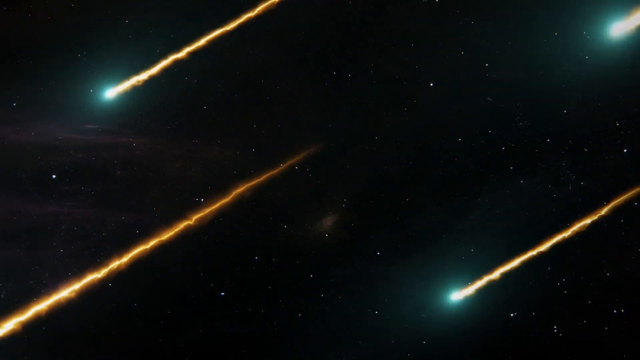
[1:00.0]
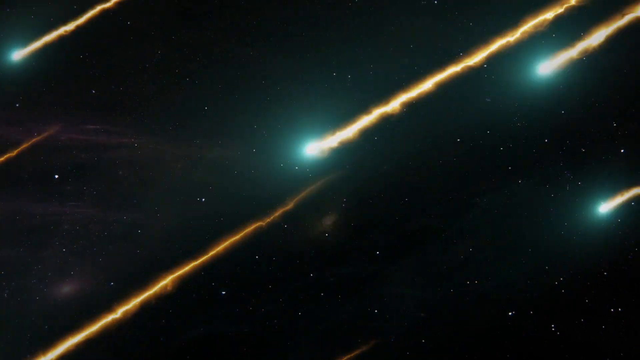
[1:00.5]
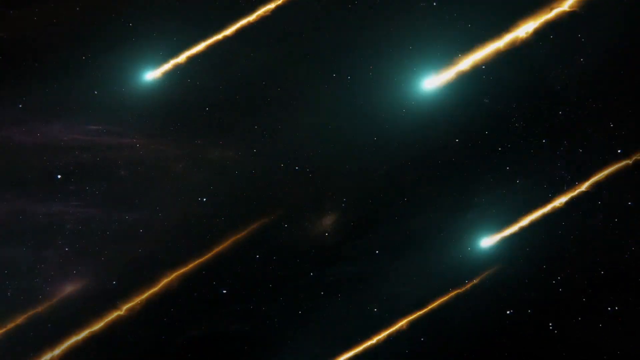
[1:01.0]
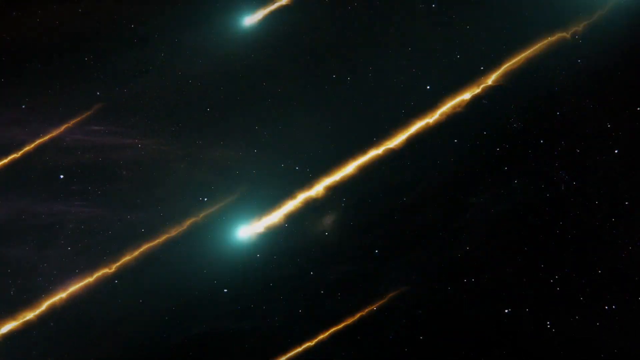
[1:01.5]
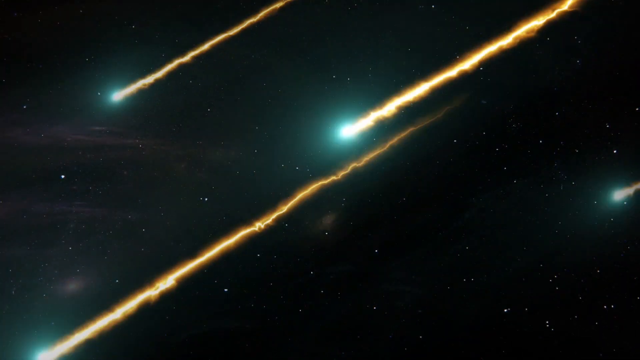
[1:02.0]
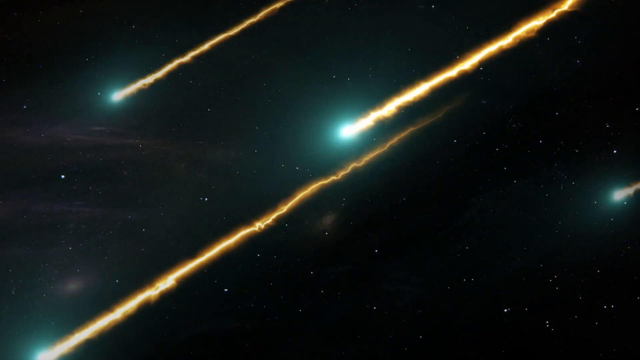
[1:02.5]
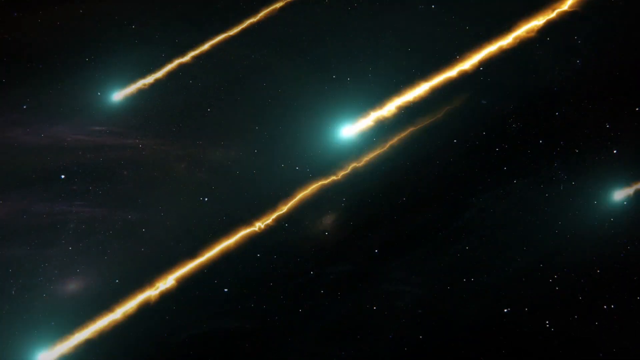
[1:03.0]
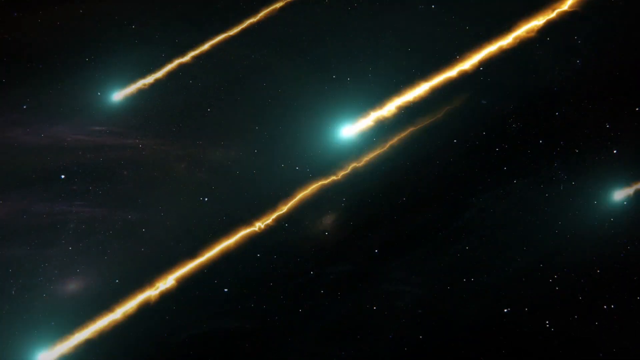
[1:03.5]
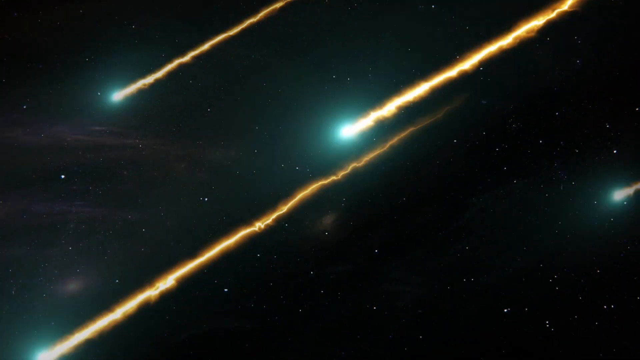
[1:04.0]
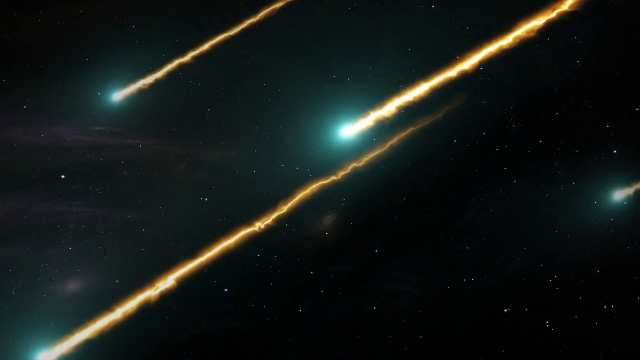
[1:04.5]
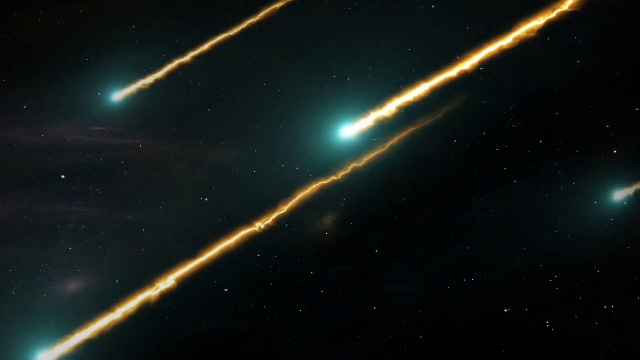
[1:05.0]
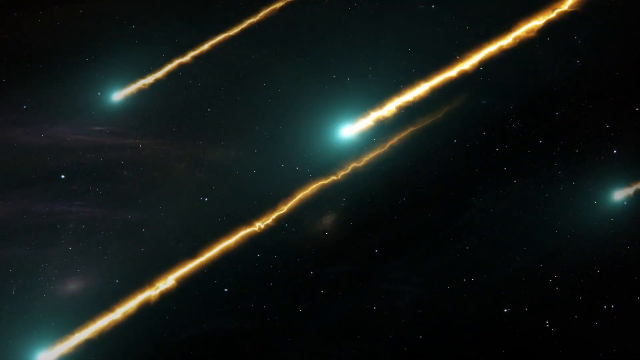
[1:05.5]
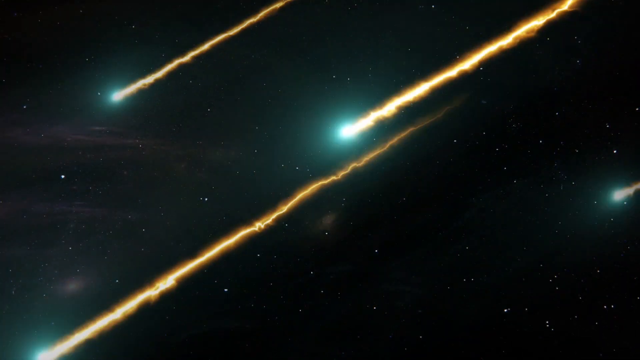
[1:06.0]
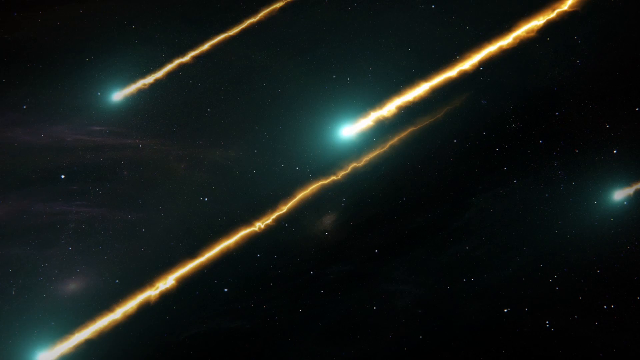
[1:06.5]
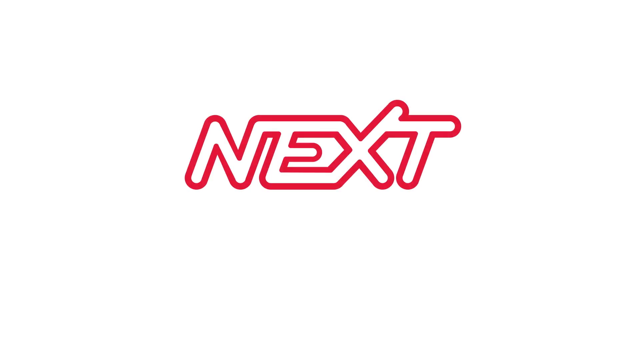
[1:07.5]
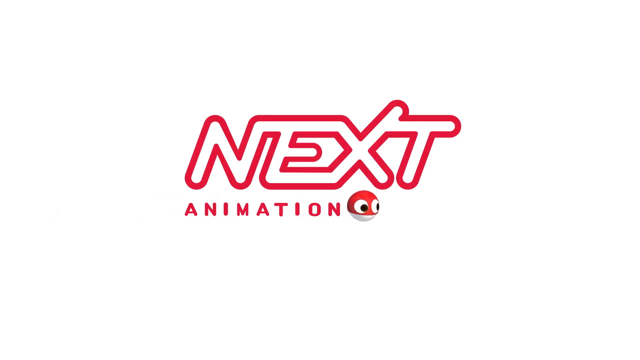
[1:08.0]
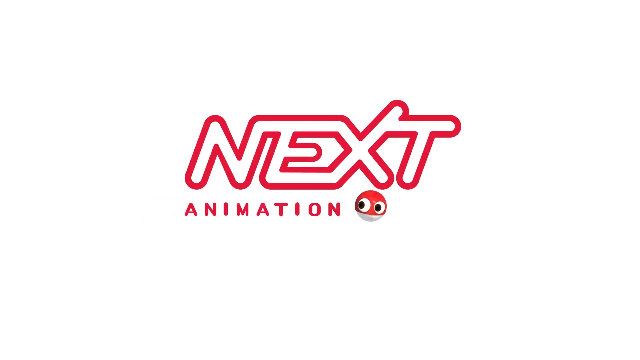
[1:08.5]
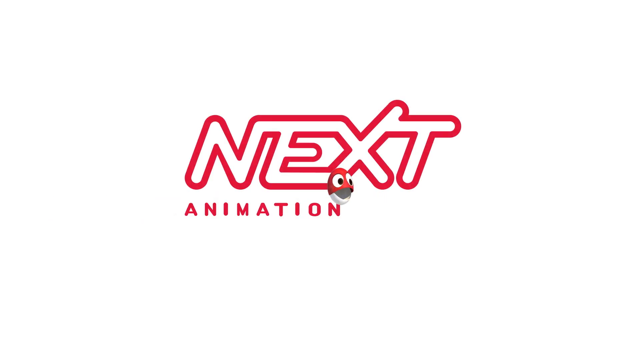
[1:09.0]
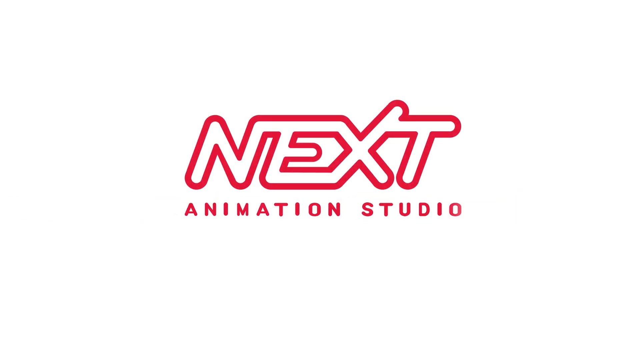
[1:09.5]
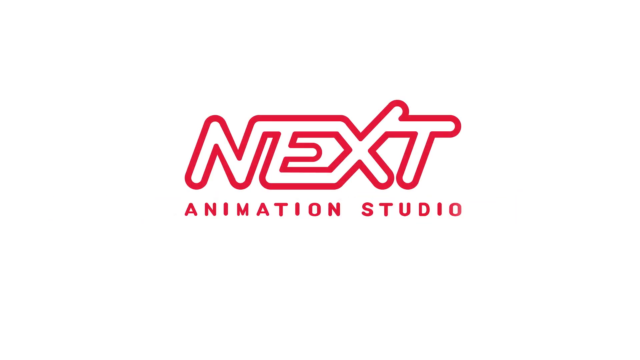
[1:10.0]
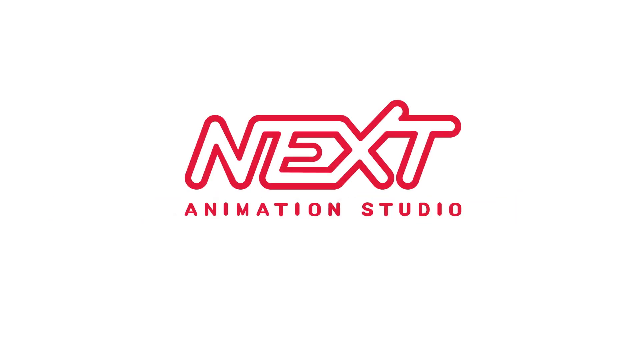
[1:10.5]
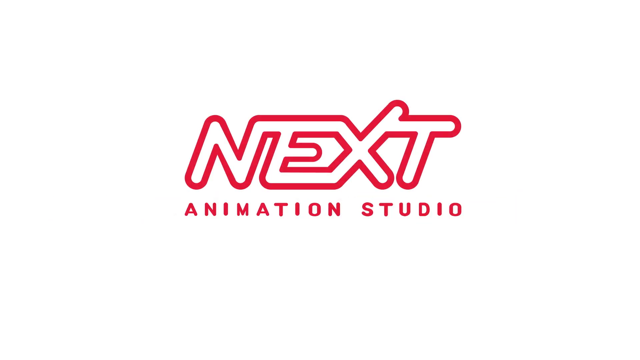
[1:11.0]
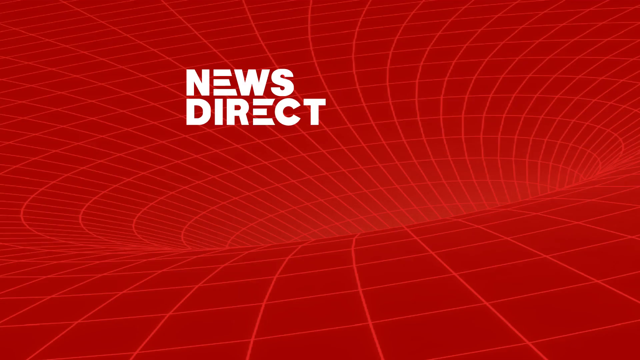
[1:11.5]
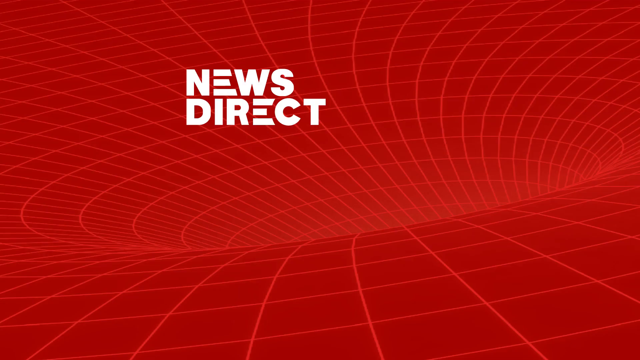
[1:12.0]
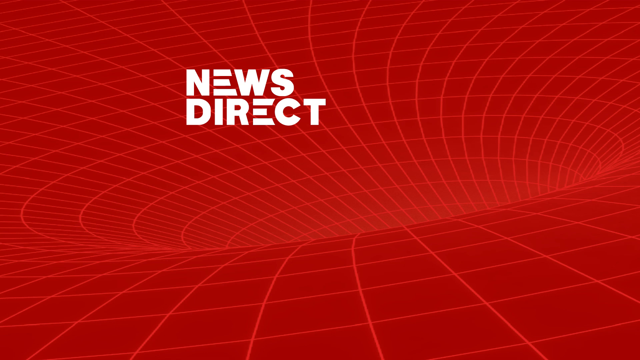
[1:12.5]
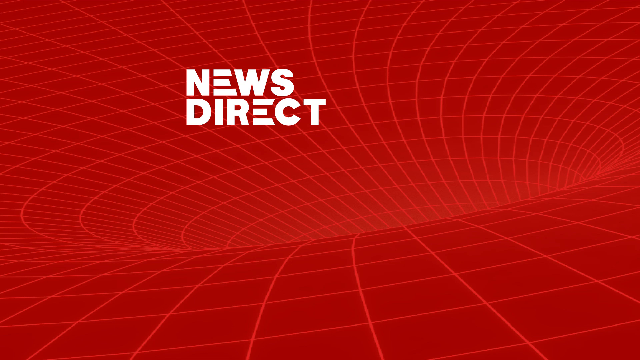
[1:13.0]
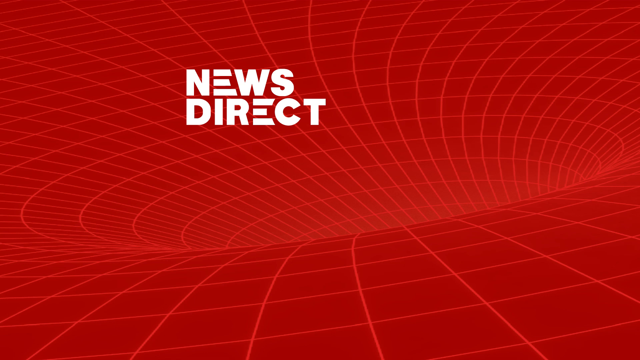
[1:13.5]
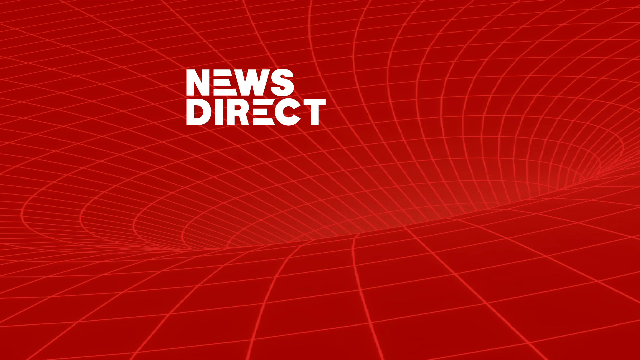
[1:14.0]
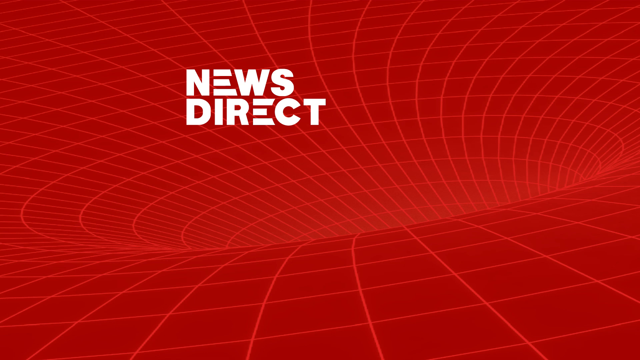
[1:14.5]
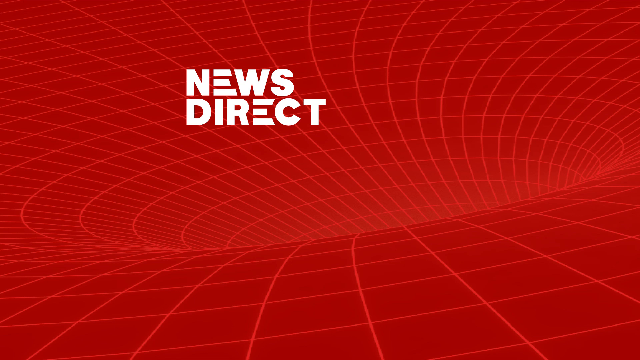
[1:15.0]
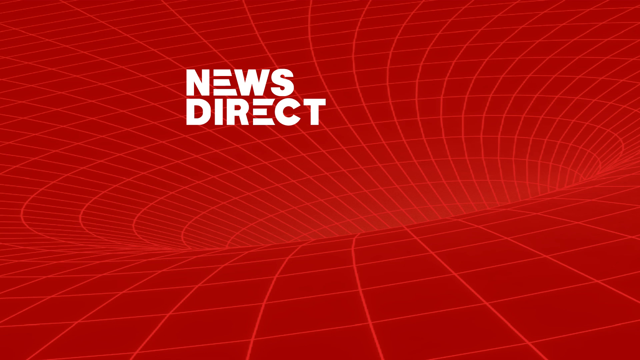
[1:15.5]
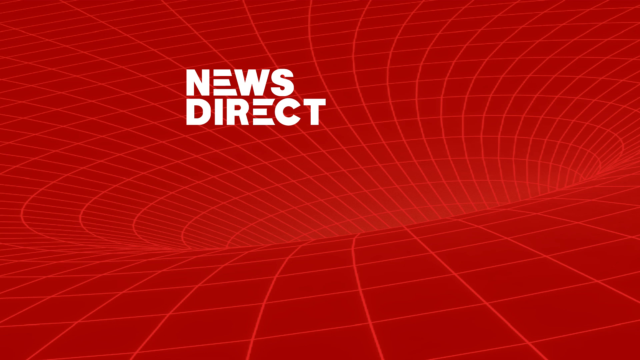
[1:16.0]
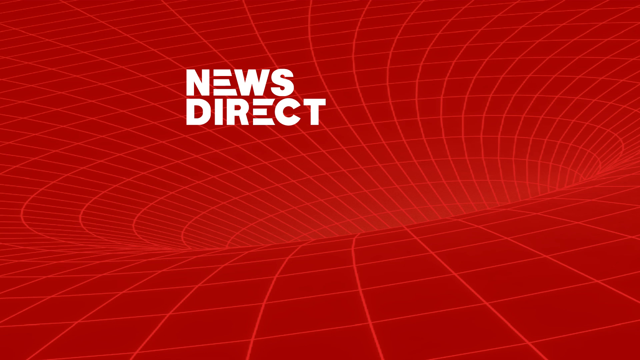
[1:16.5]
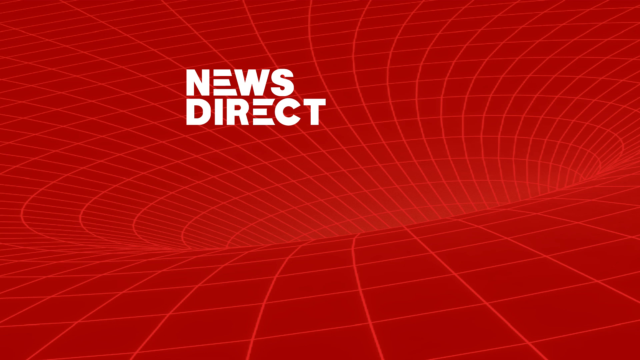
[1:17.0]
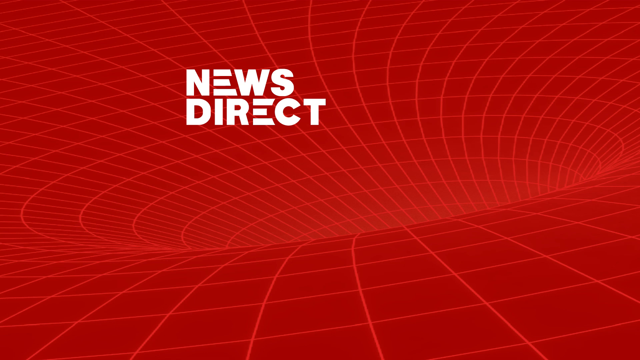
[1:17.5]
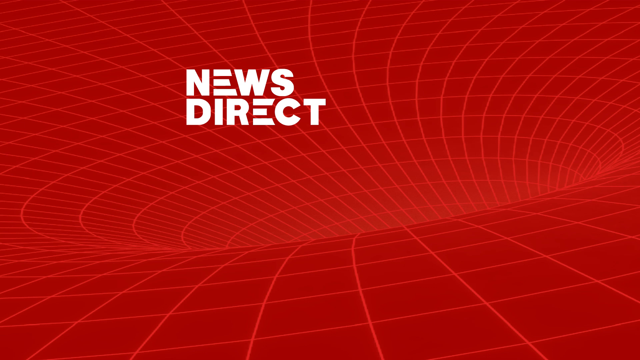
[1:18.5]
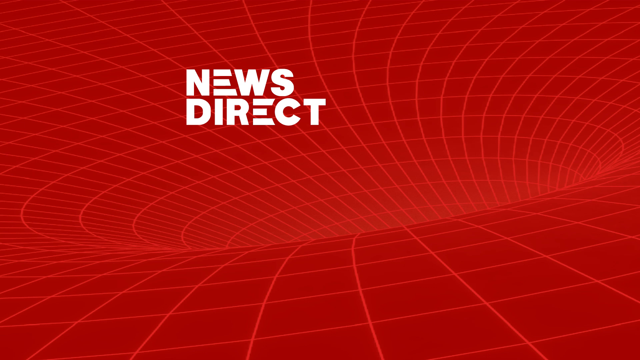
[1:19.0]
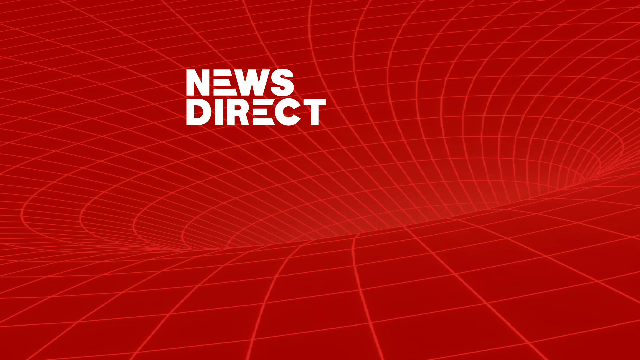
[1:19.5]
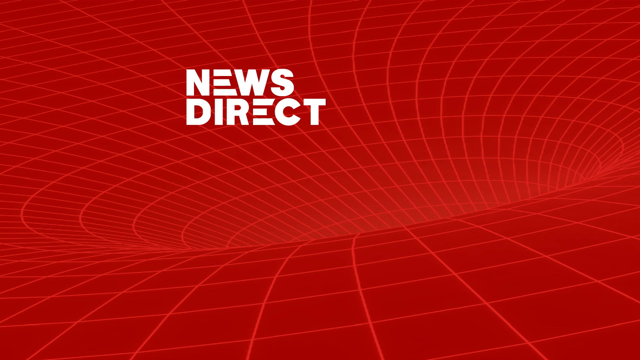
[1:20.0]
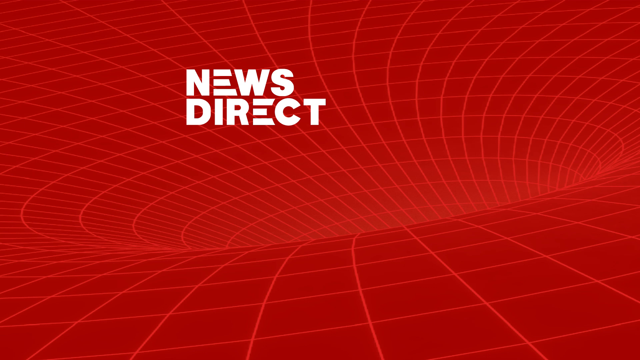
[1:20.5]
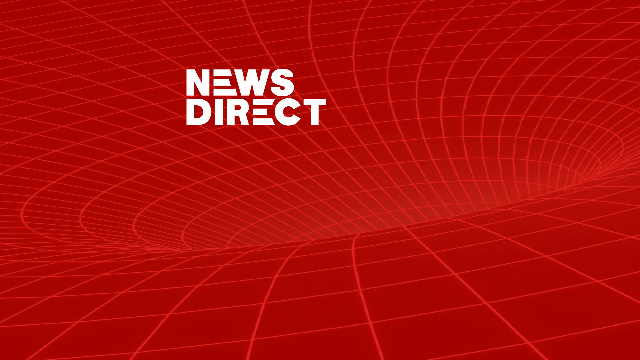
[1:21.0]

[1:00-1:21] Small things come through the air falling, apparently multiple asteroids. Then an advertisement appears for an animation studio called Next Animation, followed by a red screen with white letters that read "news direct".